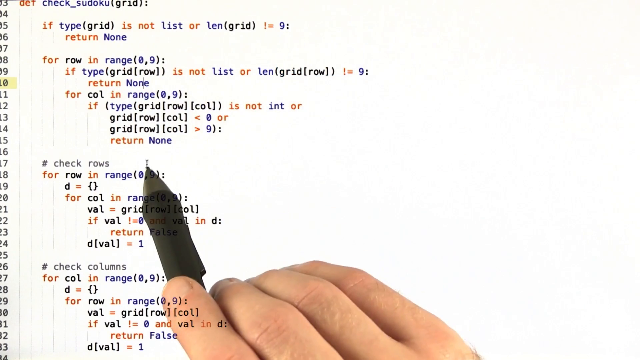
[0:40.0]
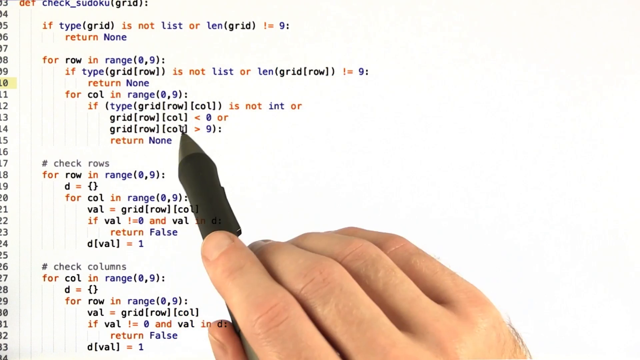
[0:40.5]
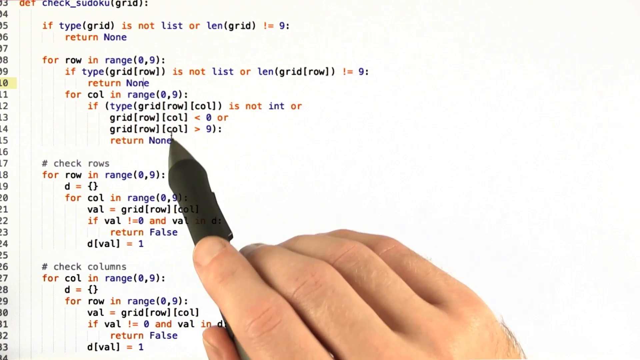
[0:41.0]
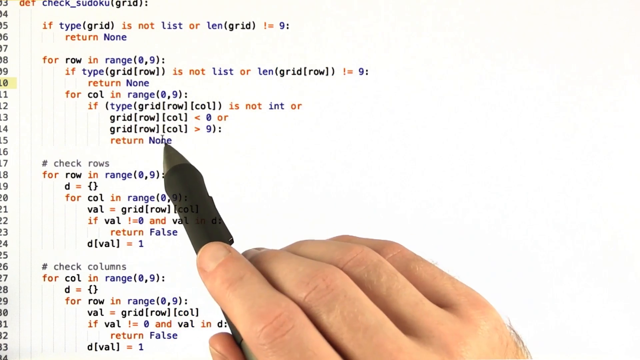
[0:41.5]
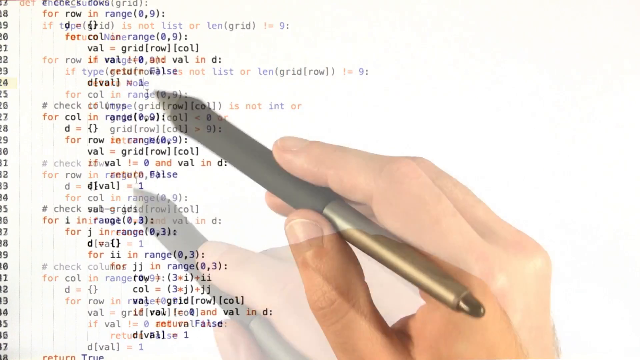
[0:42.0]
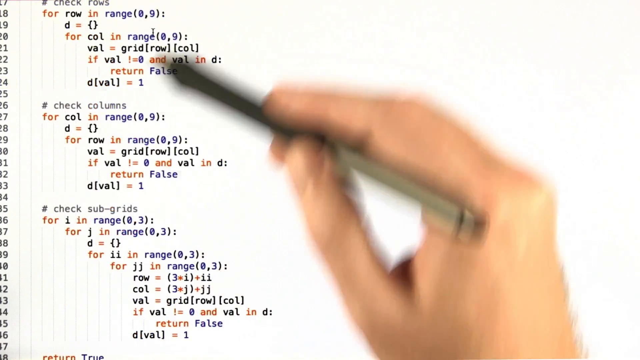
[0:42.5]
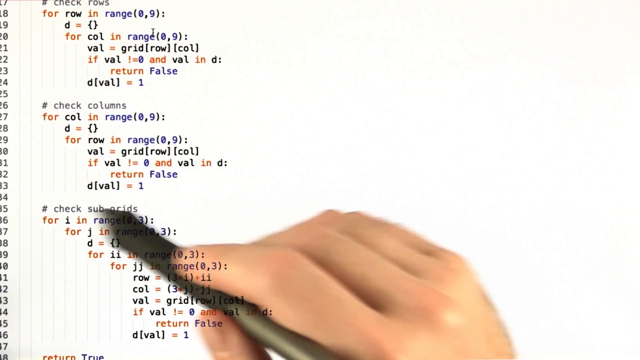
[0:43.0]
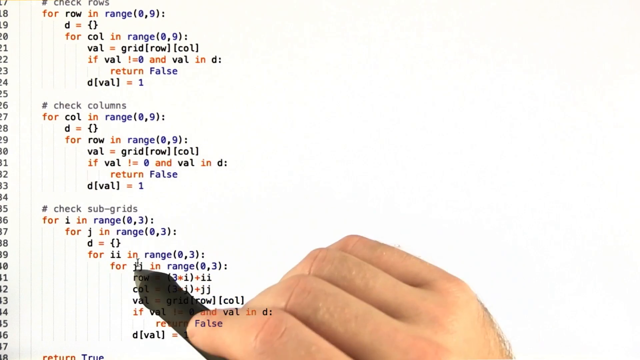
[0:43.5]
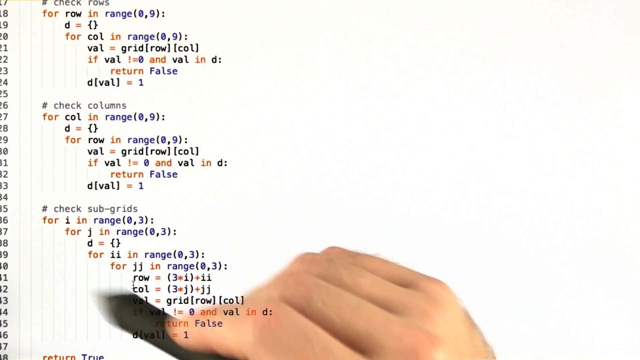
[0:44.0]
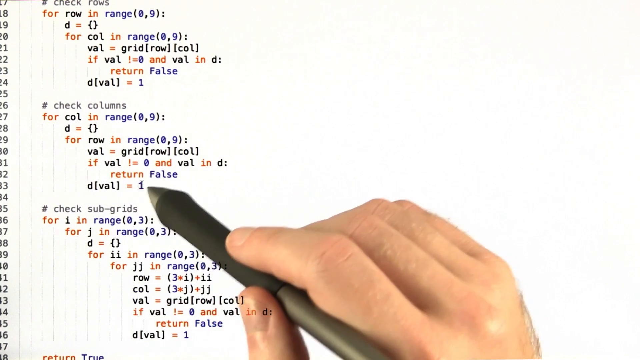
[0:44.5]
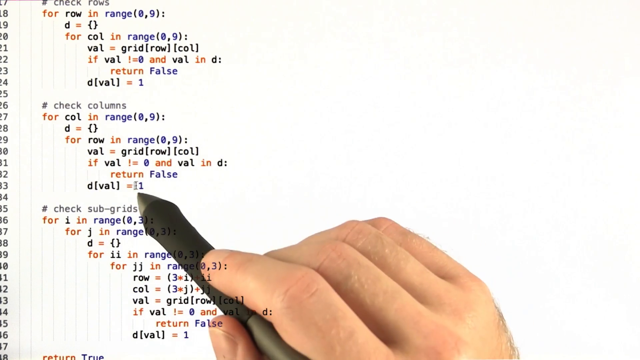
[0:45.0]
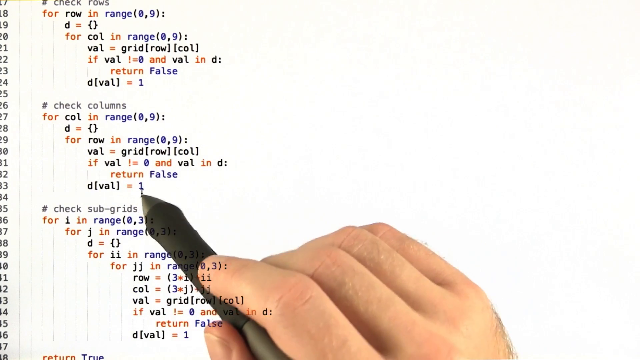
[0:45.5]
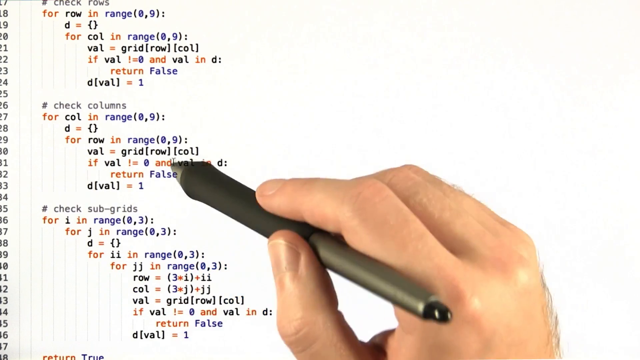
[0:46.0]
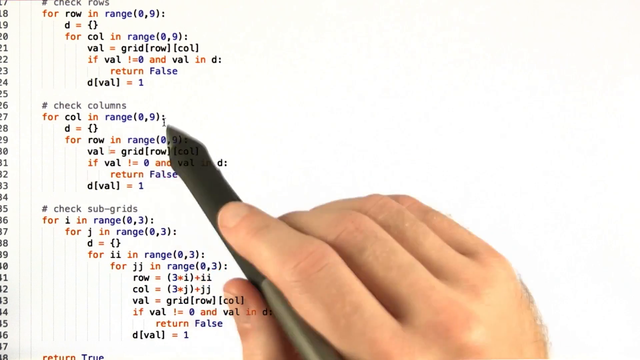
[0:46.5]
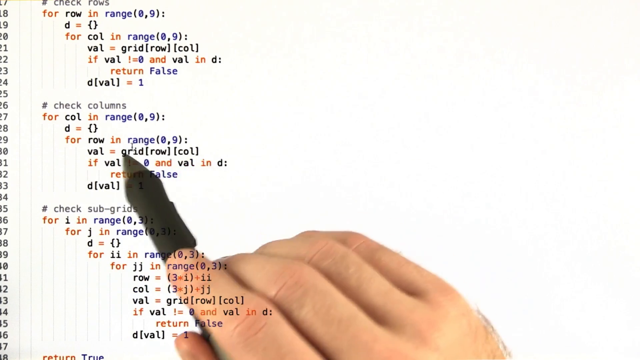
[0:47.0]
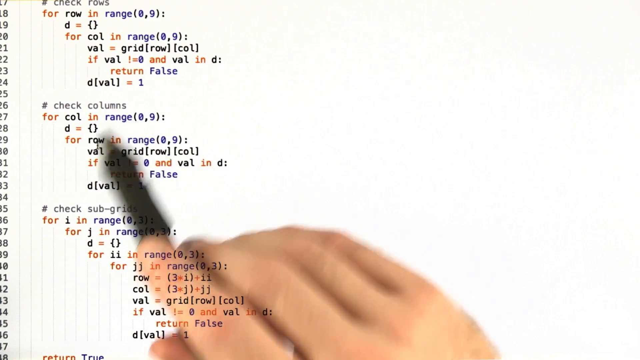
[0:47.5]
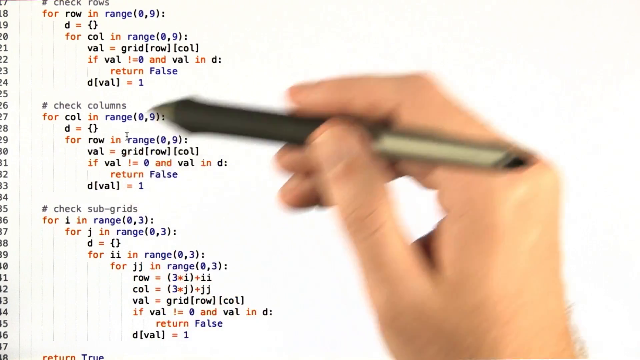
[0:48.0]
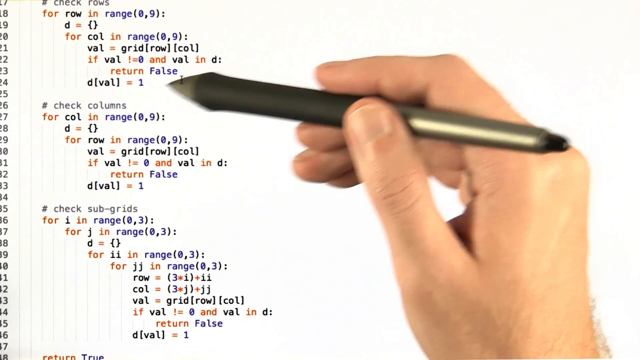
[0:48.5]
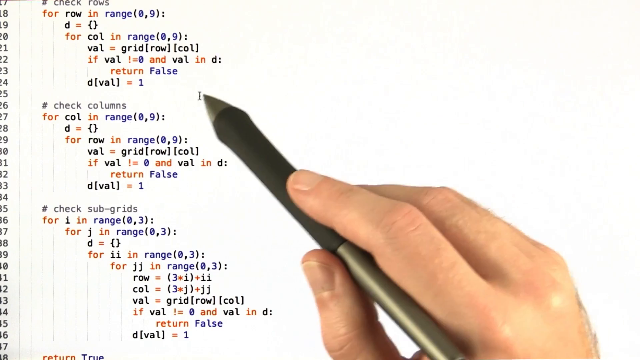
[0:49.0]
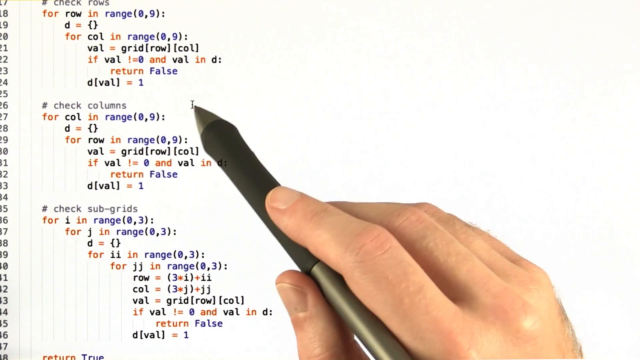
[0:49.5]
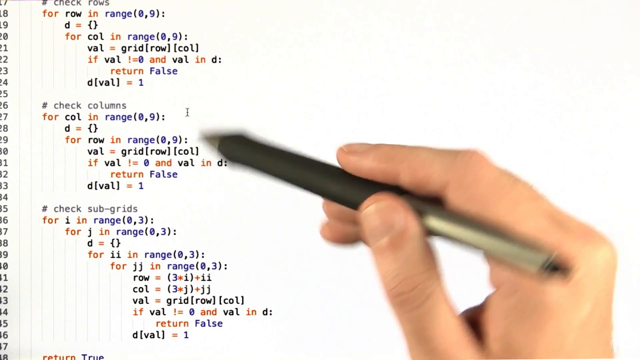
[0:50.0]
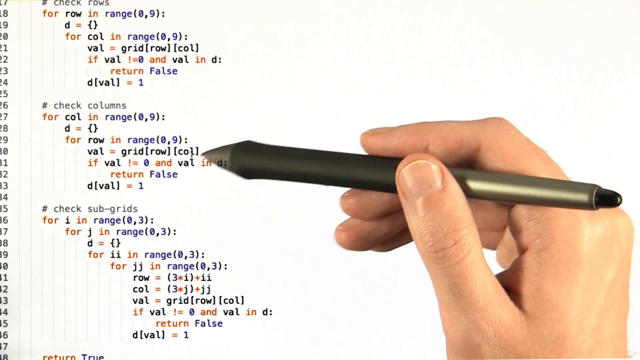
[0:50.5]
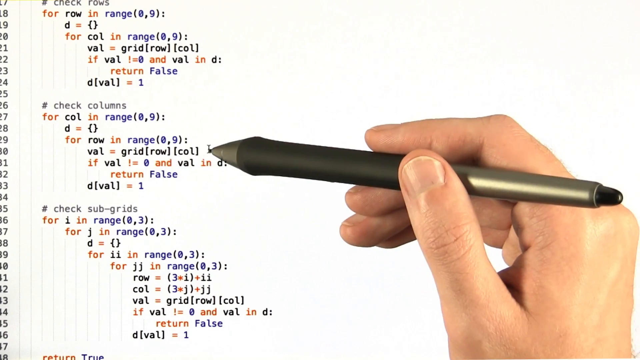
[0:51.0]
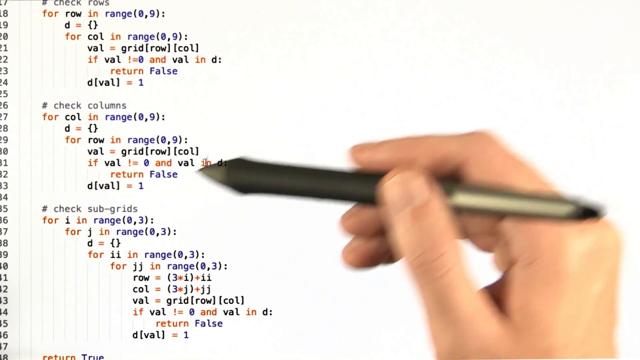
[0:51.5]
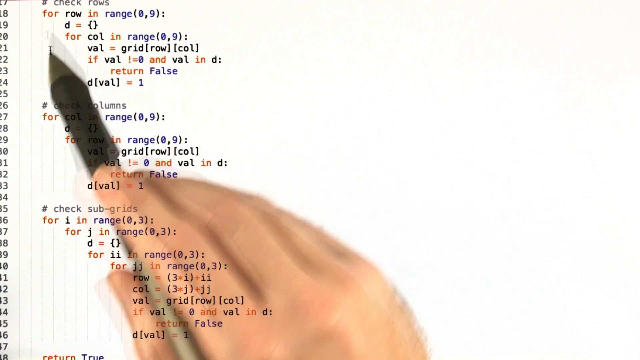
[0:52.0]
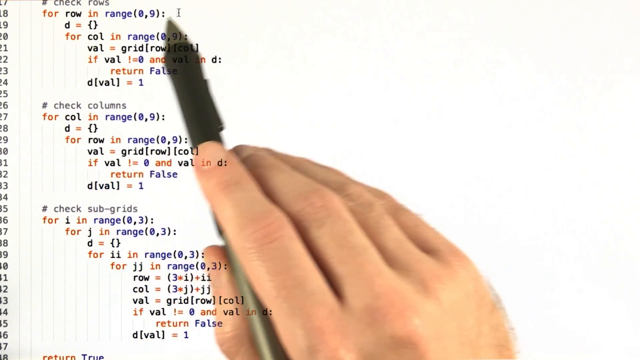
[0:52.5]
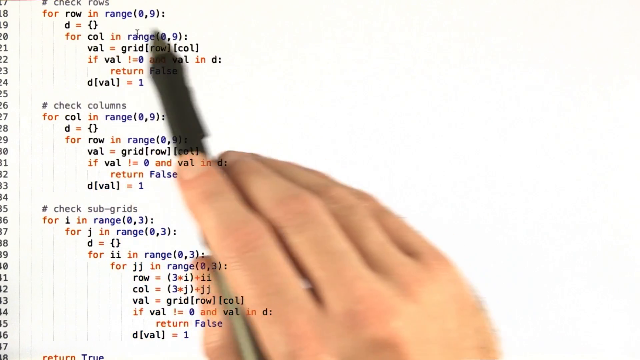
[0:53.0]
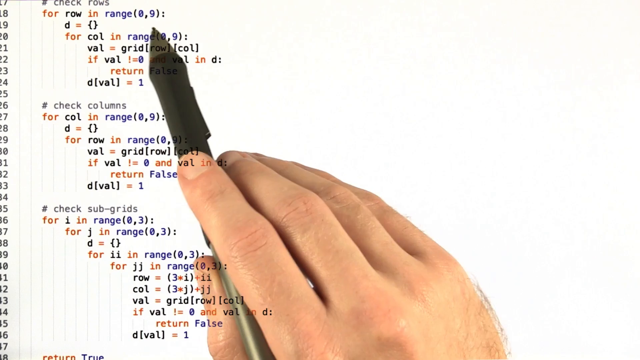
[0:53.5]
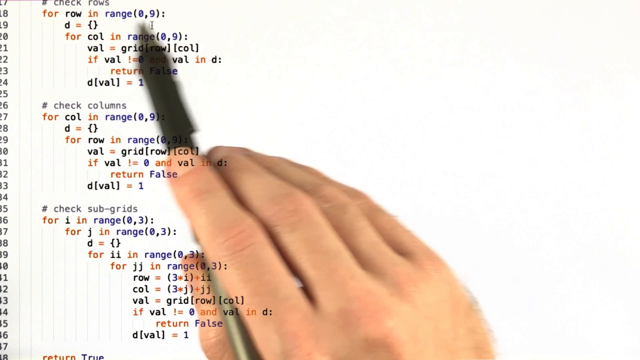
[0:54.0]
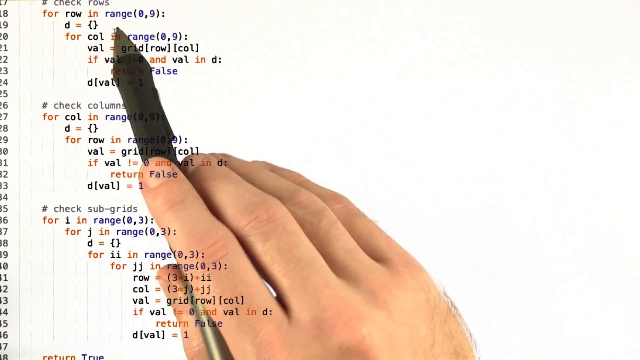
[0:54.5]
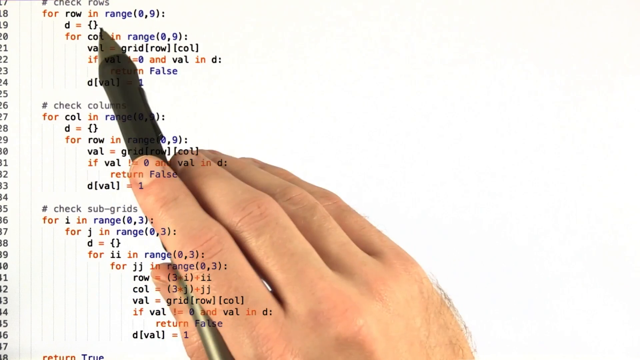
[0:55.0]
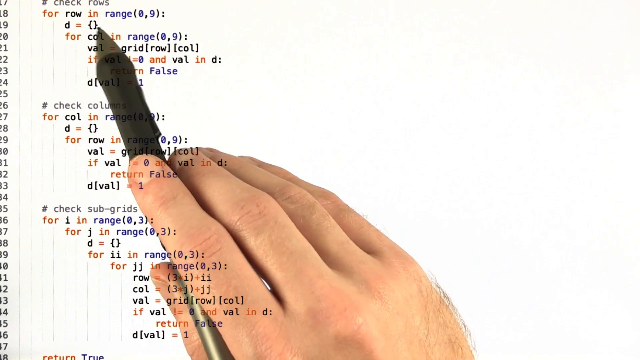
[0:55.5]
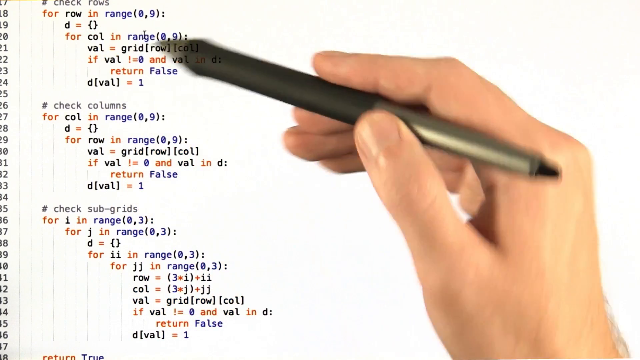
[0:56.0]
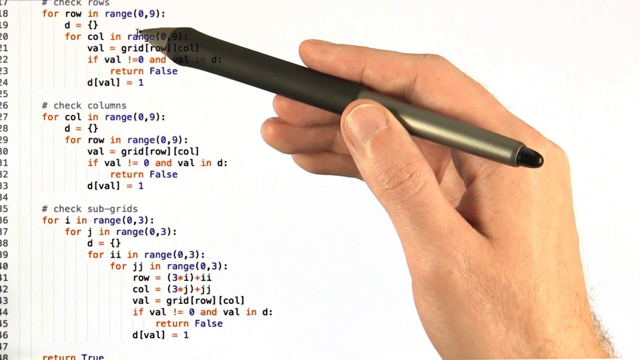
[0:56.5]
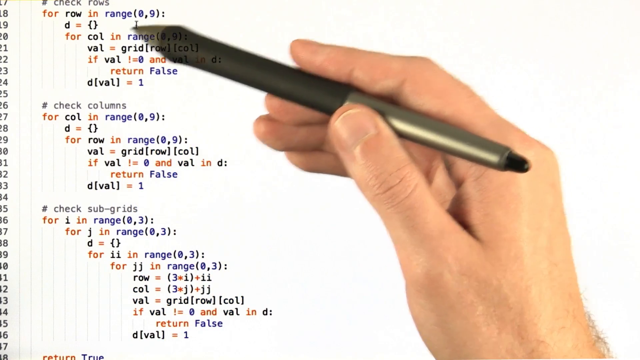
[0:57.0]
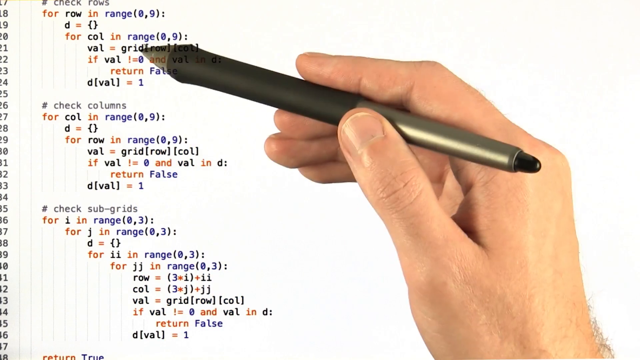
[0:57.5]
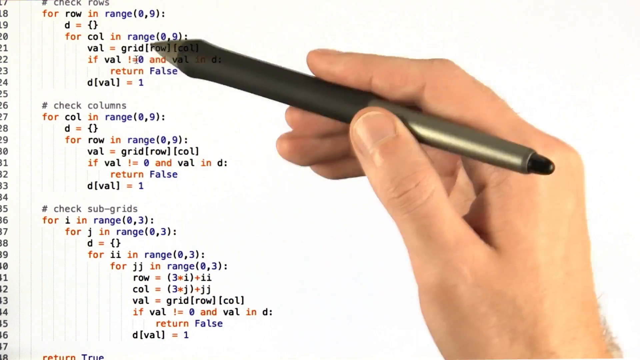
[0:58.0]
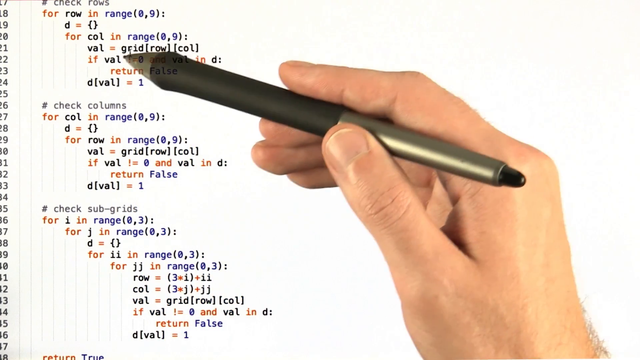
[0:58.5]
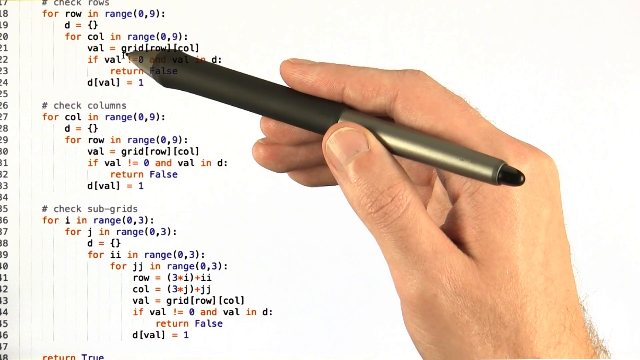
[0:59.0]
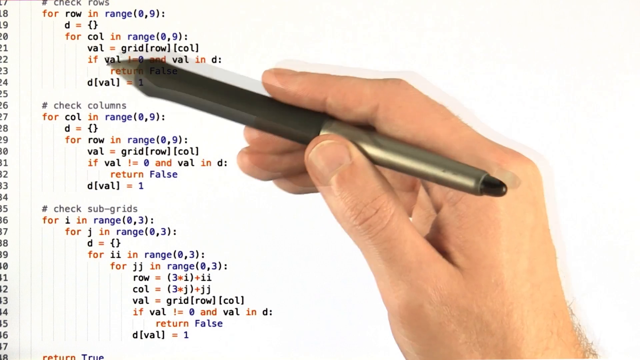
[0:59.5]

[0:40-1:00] A hand holding a digital pen moves back and forth over different lines of code, apparently as the person explains the code. Row numbers run down the left-hand side from top to bottom, marking the line each piece of code is on. The code contains if statements and for statements in a combination of orange, purple and black, probably about 20 lines in total, on an all-white background. It is a single screen of code, but after maybe three to four seconds there seems to be a quick, slight transition to another part of the code.